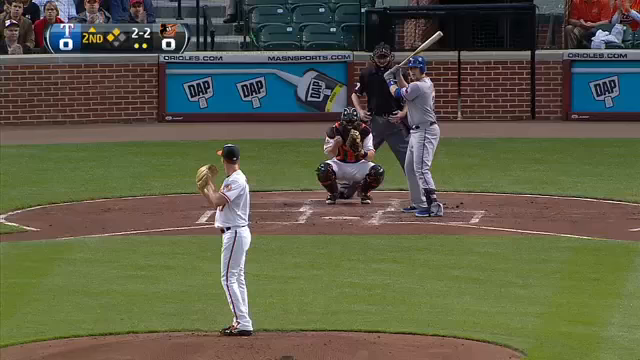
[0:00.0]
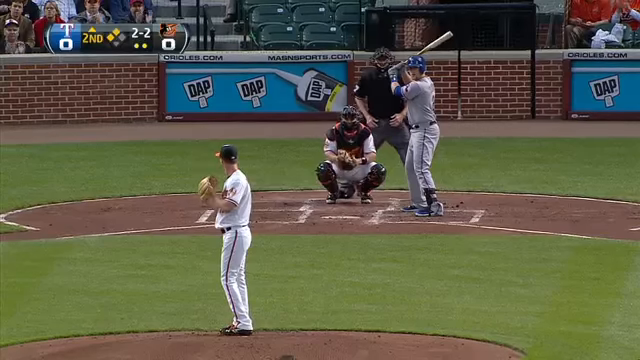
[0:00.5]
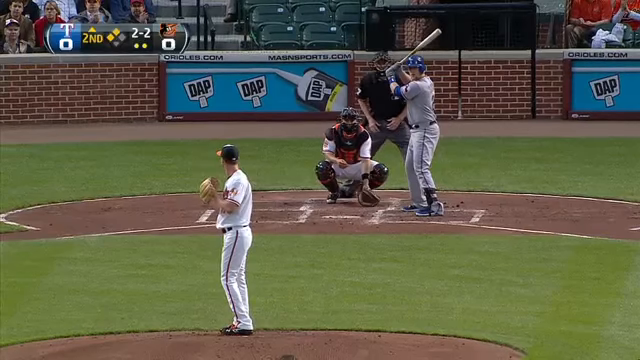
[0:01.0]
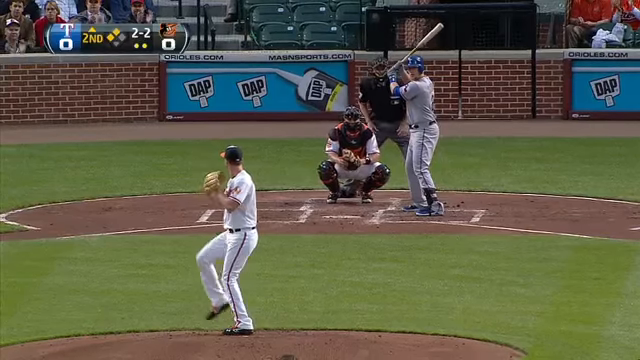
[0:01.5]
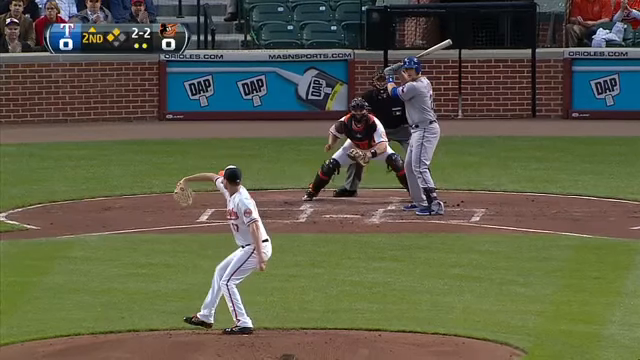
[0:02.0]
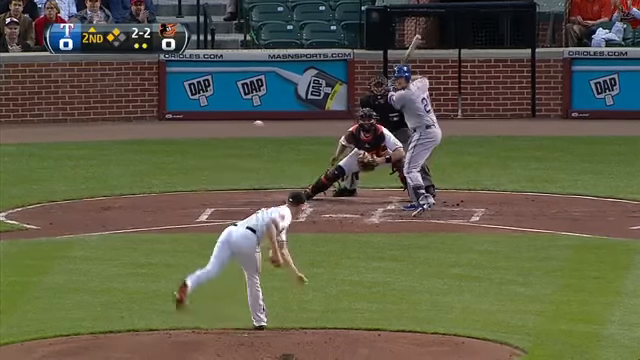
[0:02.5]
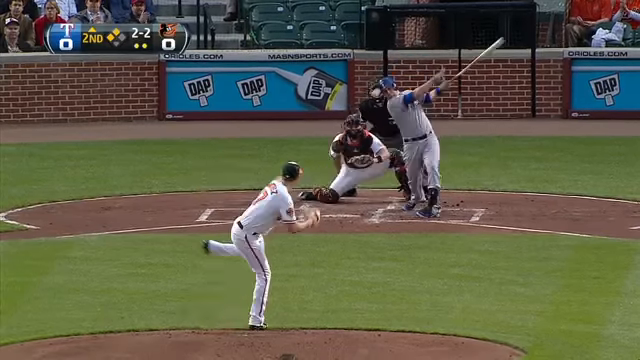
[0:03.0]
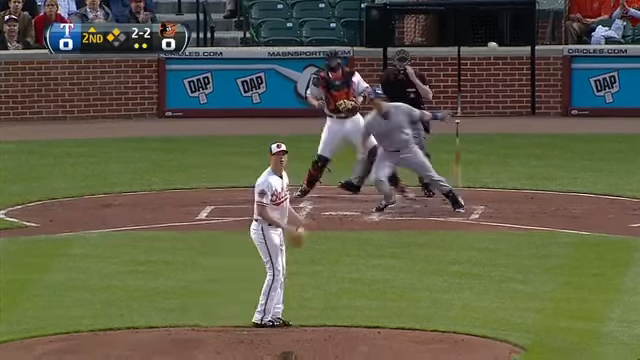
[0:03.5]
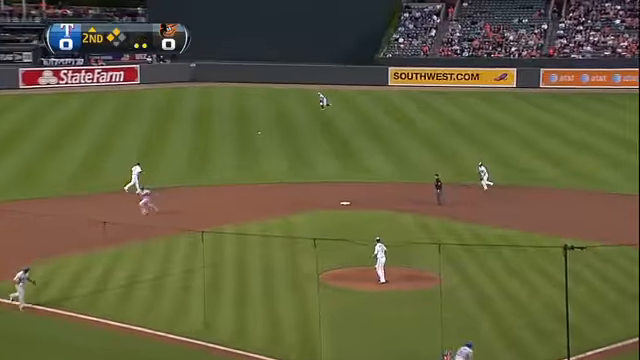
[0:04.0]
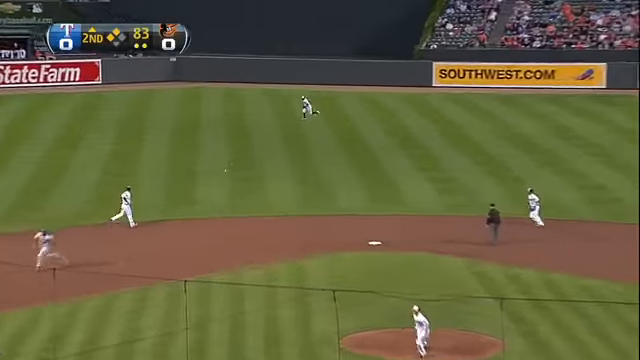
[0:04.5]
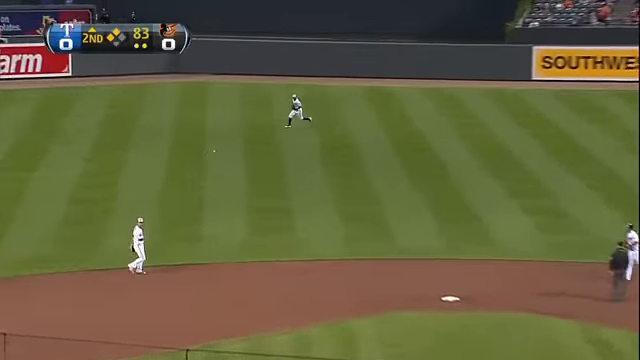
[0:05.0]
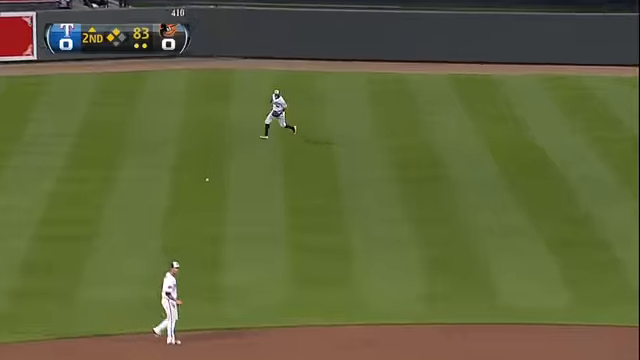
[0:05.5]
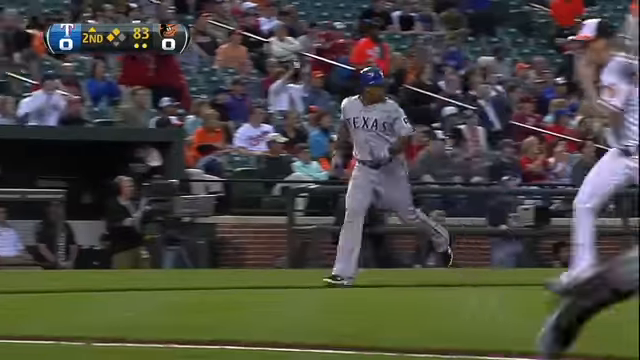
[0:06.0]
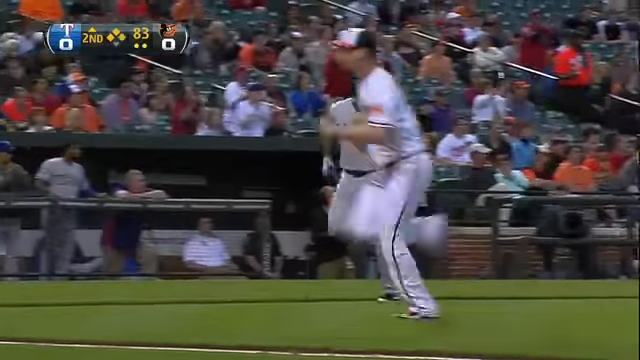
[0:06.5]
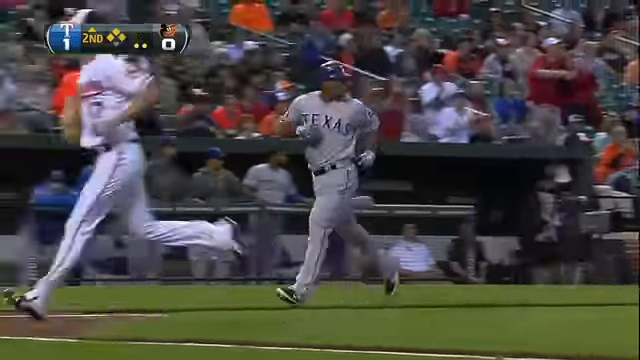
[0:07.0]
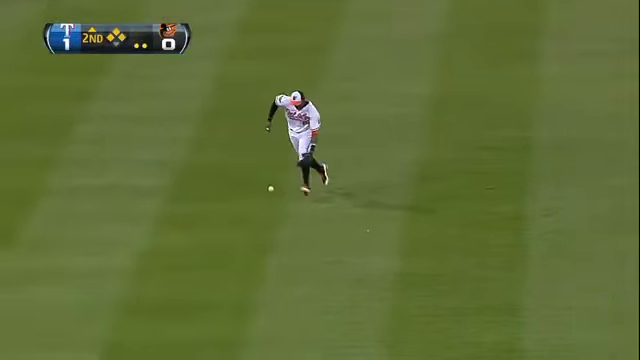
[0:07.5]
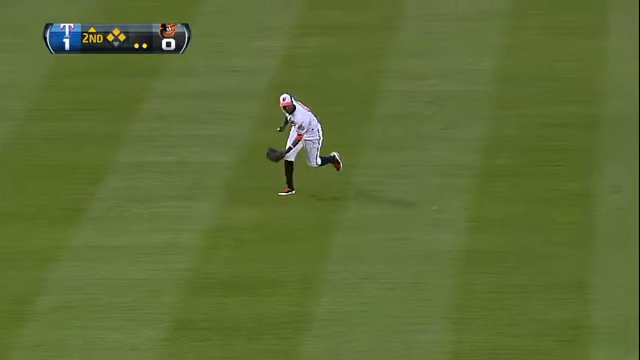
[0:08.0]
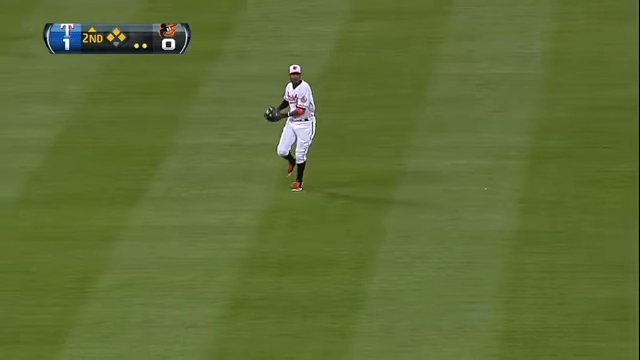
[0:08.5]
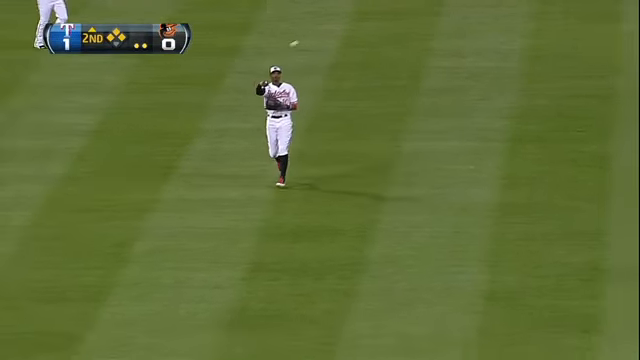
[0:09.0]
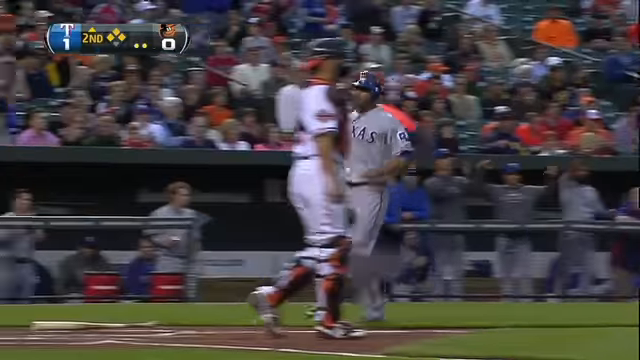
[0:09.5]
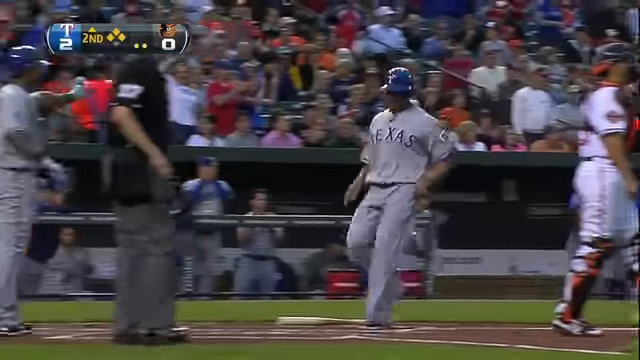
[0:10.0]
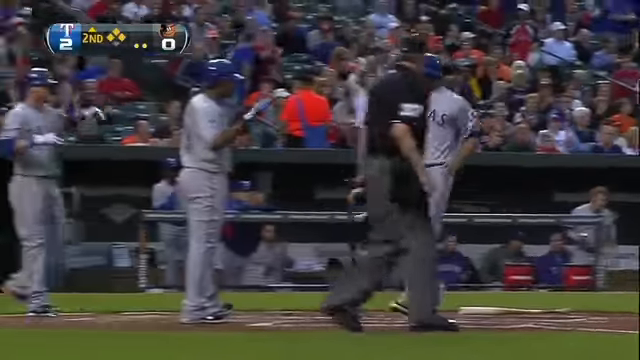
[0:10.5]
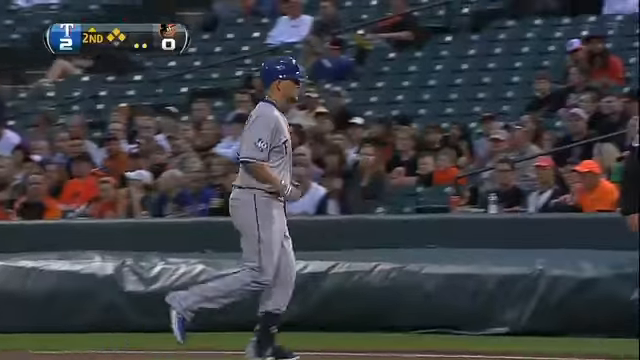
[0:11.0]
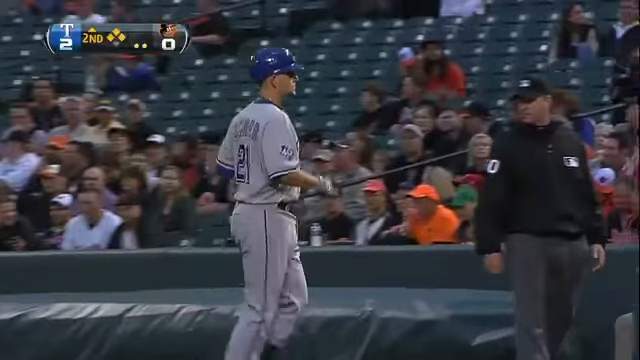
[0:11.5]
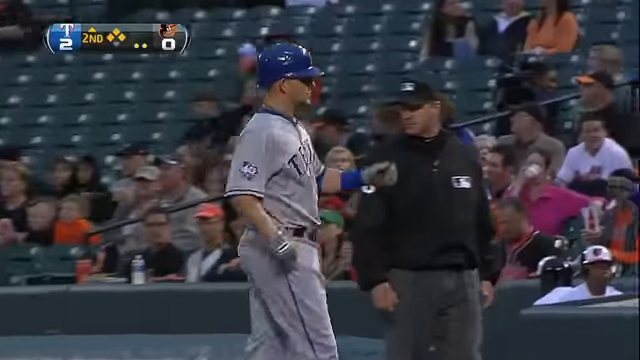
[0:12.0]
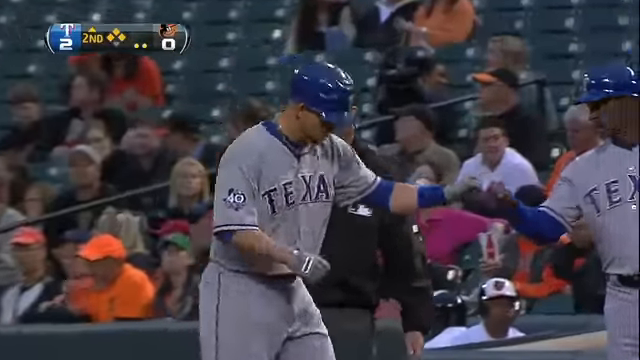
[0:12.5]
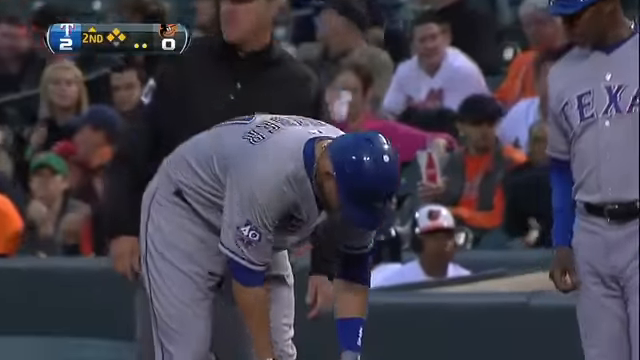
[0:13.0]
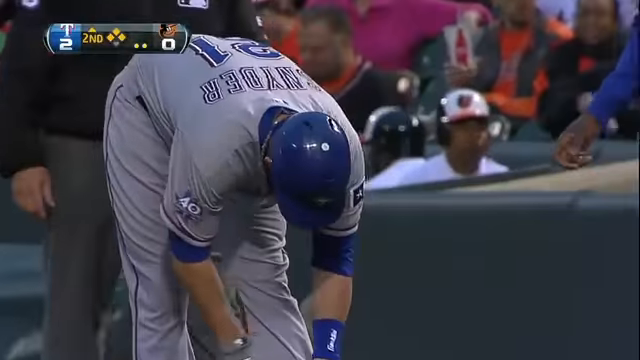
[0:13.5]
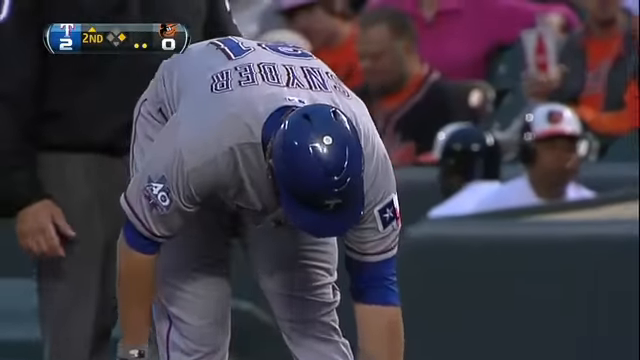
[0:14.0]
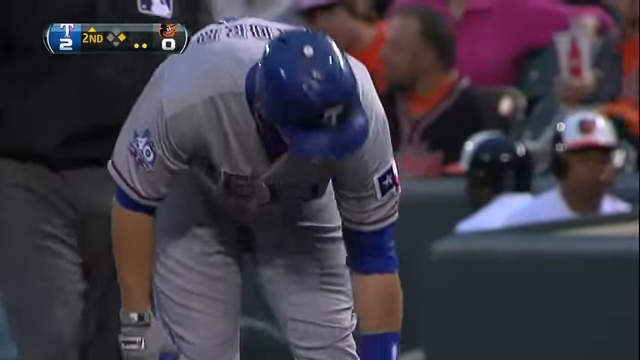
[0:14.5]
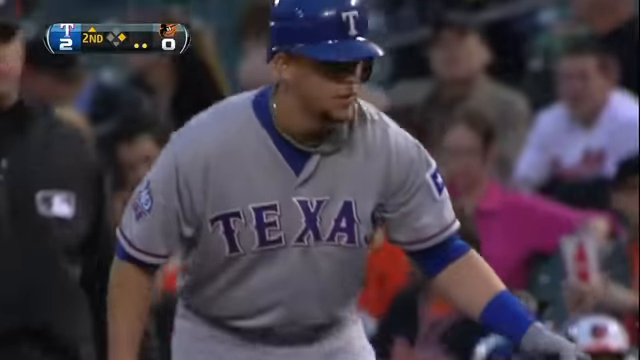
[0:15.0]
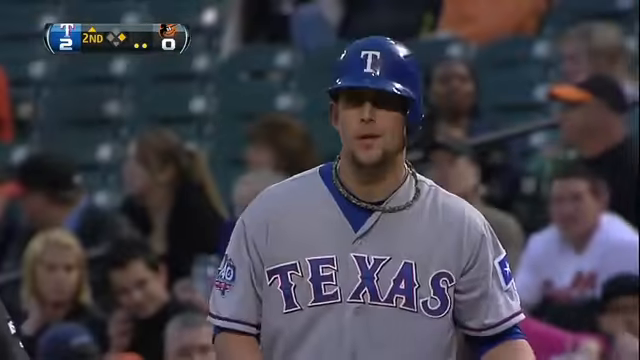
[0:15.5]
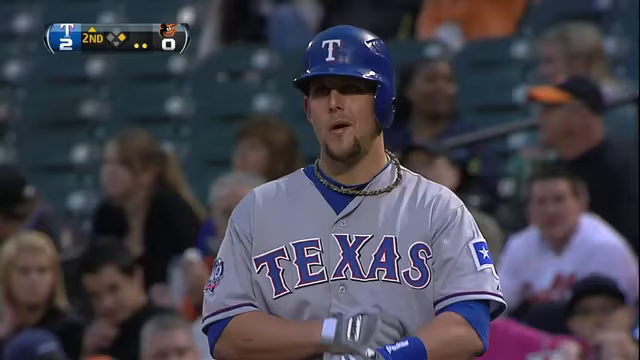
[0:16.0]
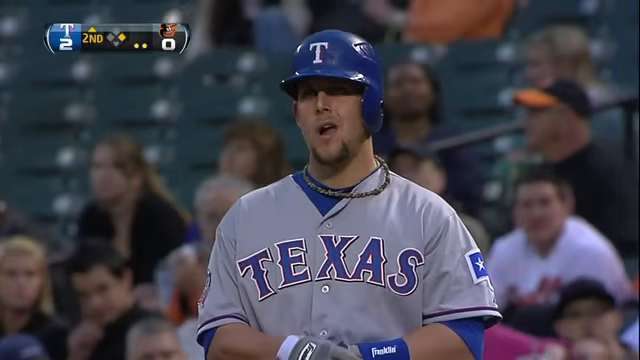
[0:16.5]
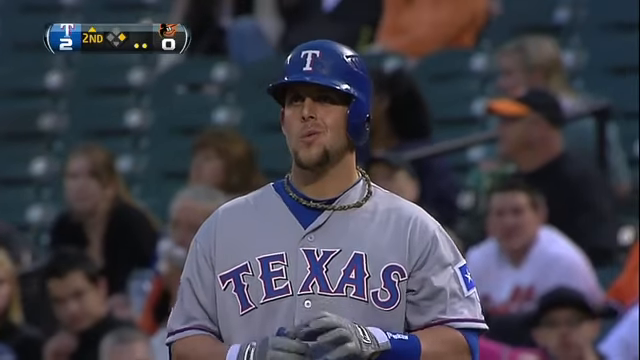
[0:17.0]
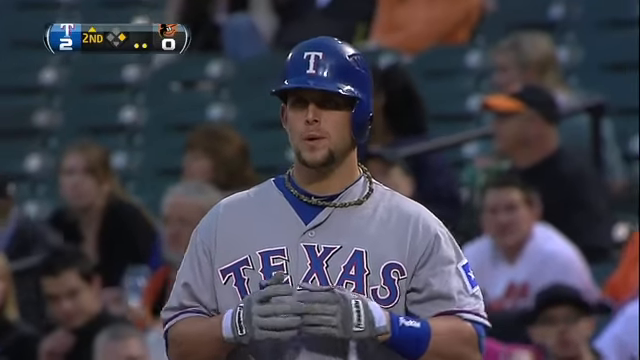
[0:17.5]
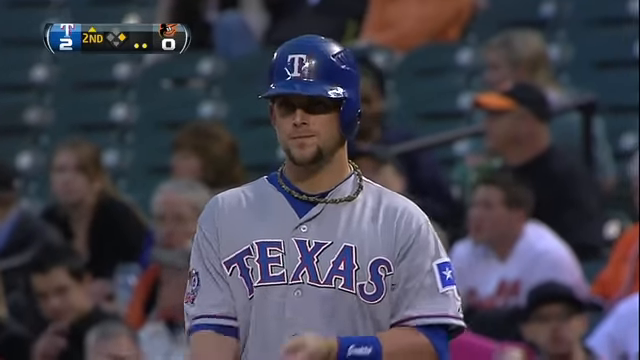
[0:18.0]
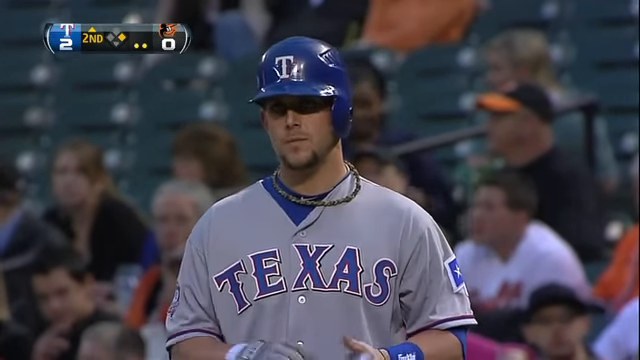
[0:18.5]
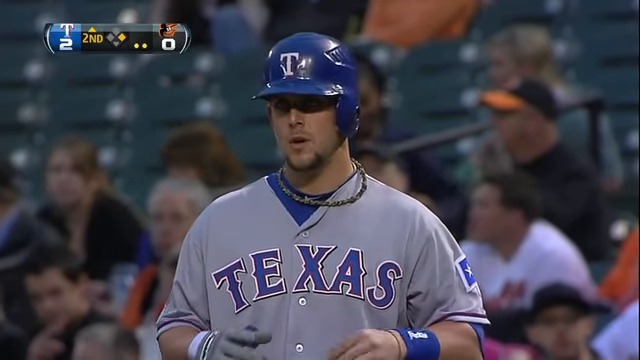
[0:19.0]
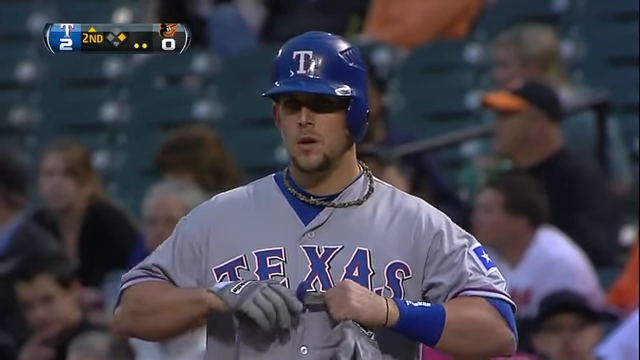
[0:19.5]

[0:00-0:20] A pitcher throws a ball toward home plate, and the batter hits it into the outfield. The two teams playing are the Texas Rangers and the Baltimore Orioles; it is the second inning and the score is 1-0. The batter's hit is a single into the outfield that brings in a runner, scoring a run. His first base coach congratulates him with a fist bump. The runner, now at first base, is removing his gloves, and "Texas" is spelled on his jersey in large blue letters. In the background, some people in the stadium are watching the game, but some of the seats are empty. The player at first base has a necklace, wears a hard helmet with a white T on it, and his jersey is light blue.